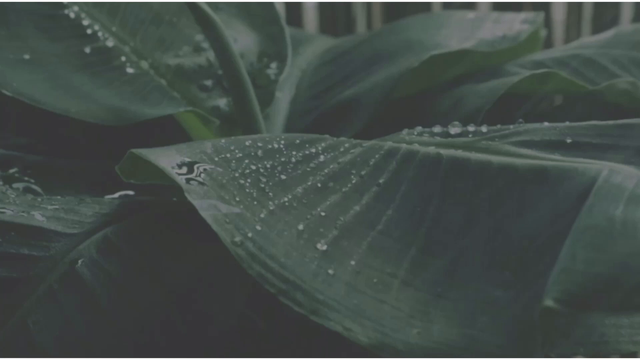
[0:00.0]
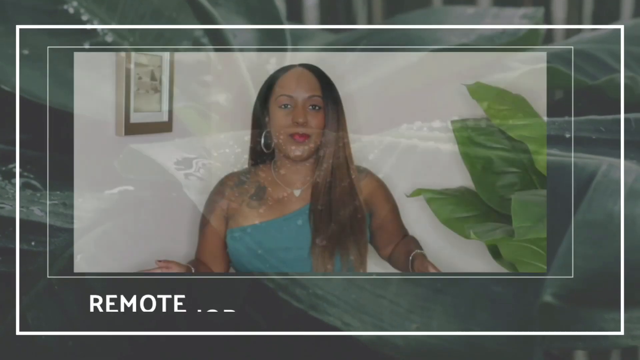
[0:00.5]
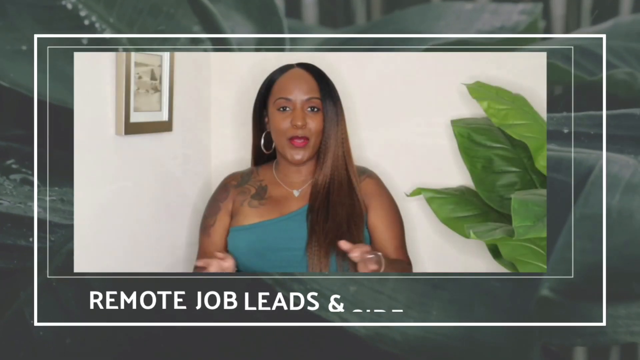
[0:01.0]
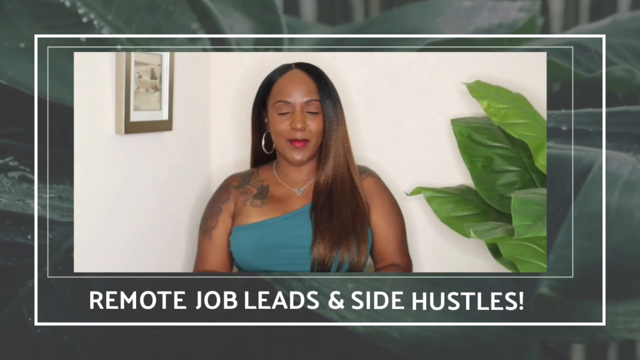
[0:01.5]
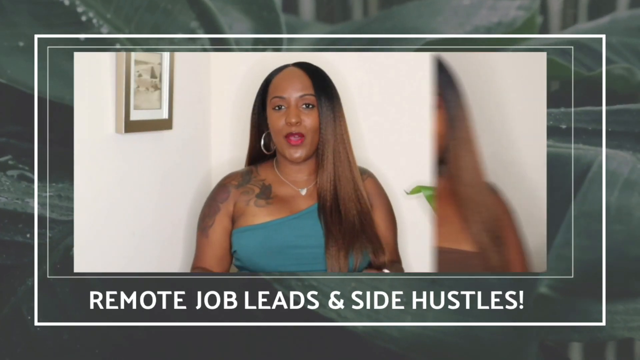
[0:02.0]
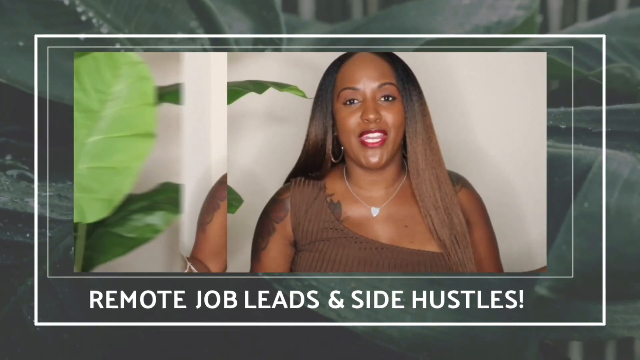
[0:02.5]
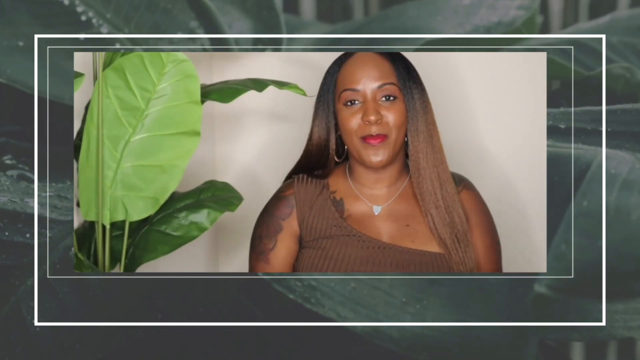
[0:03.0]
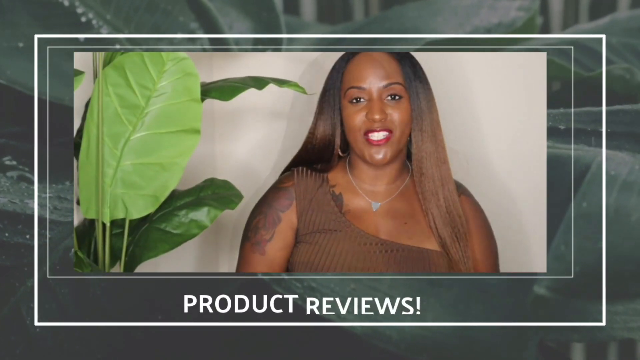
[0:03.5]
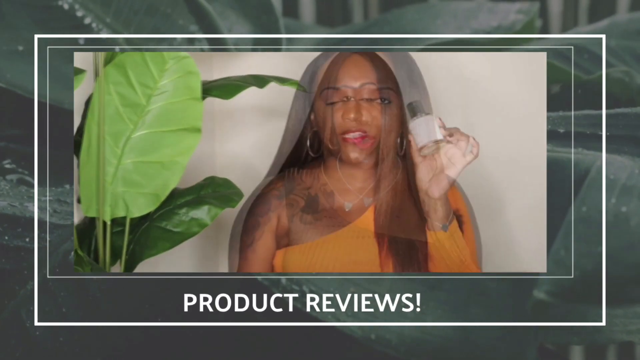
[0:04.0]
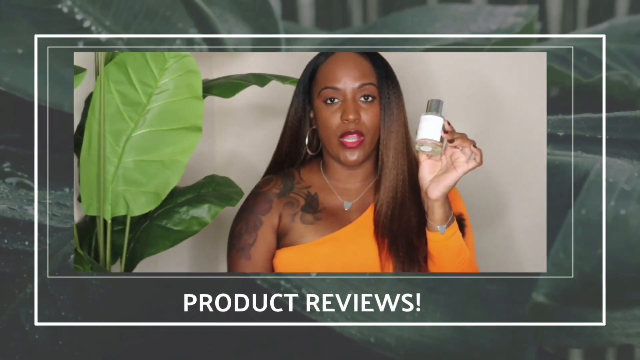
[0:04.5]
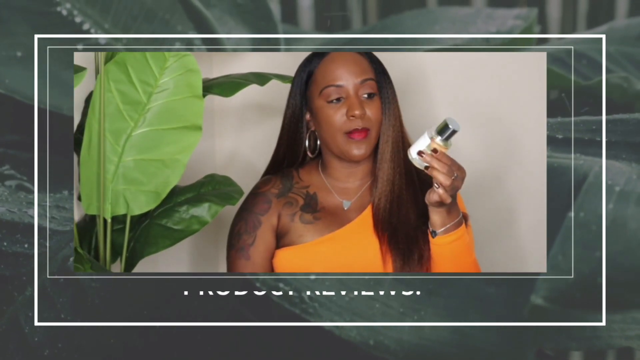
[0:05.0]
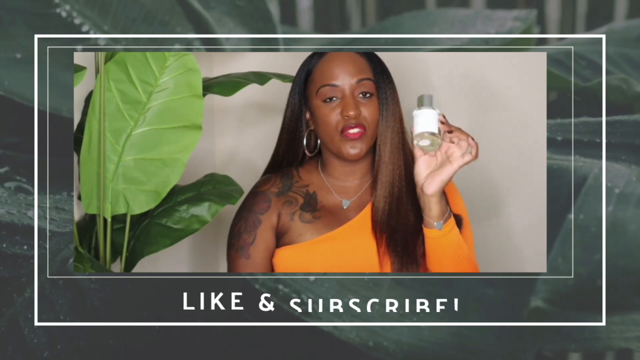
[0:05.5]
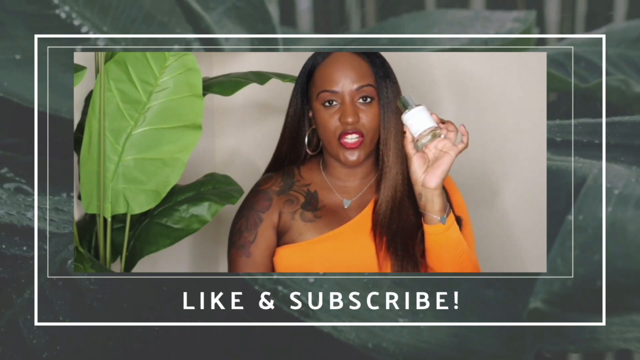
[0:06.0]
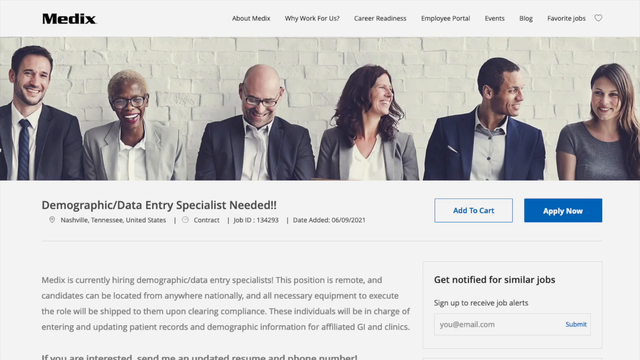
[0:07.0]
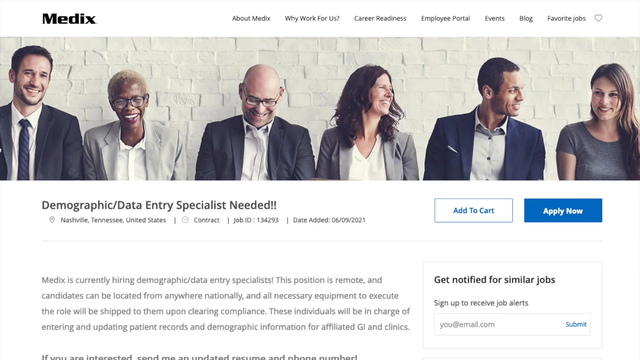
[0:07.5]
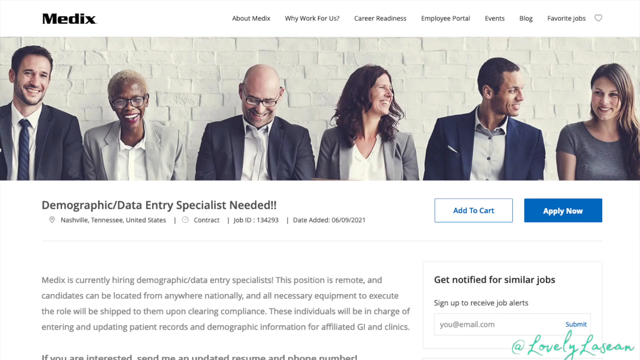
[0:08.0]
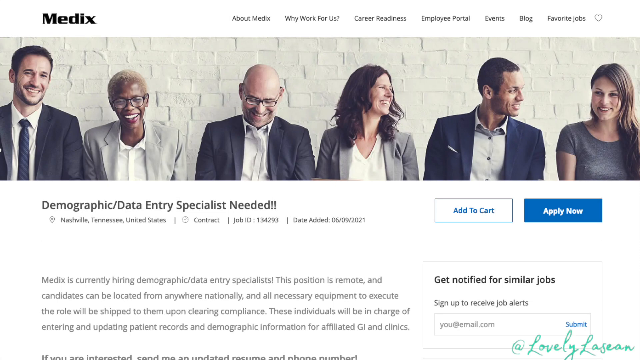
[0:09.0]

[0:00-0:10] The video appears to be some kind of product review on social media, seemingly a YouTube video. An African American woman appears, and the view quickly pans to what is possibly a product page where the product can be bought. It looks professionally done, with various overlays and graphics for the text placed over the top of the video.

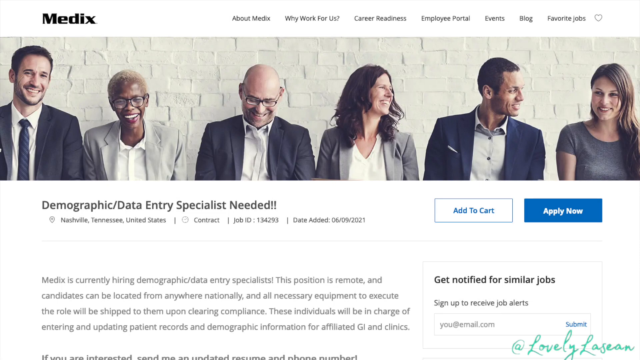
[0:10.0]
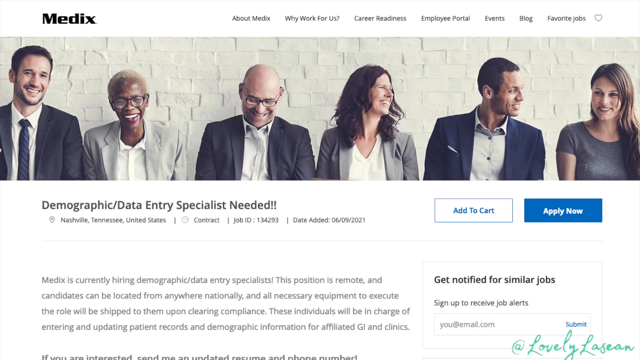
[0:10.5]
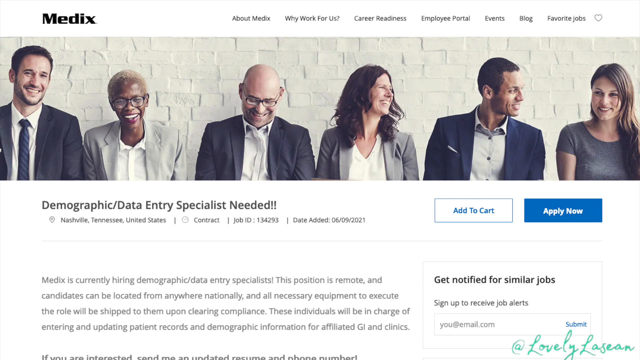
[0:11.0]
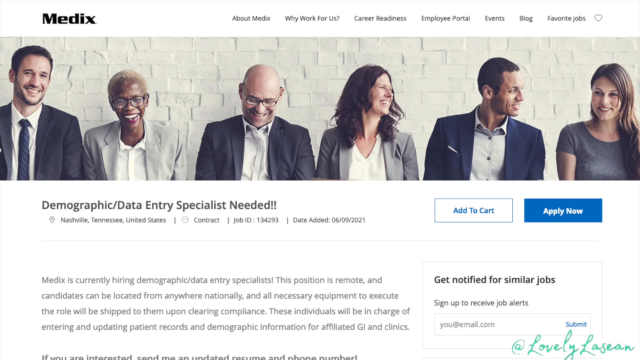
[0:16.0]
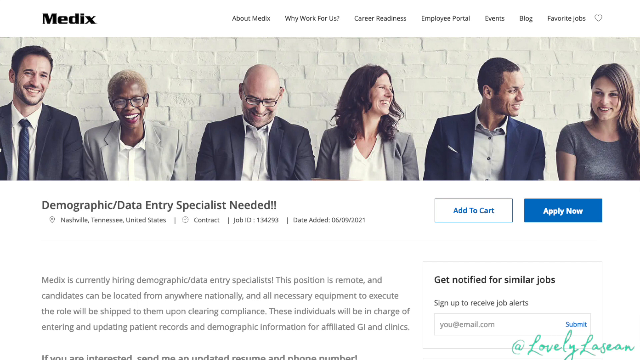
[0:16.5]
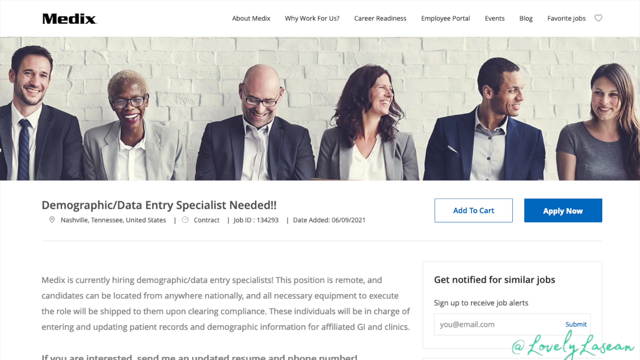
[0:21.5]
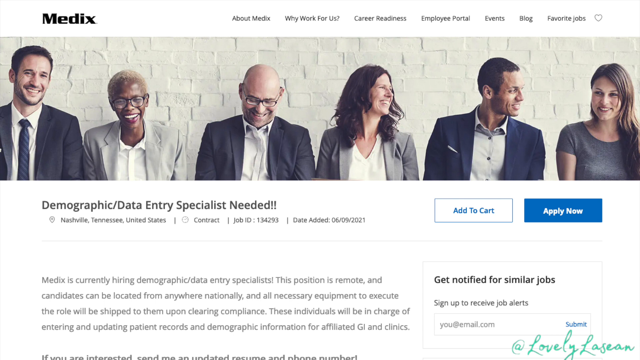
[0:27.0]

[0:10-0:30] The view flips to a page reading "data entry specialist needed." The page shows the location, the contract and the date it was added. The woman is apparently some kind of influencer, possibly showing side hustles and different ways people can make money online, with this data entry specialist job as one example.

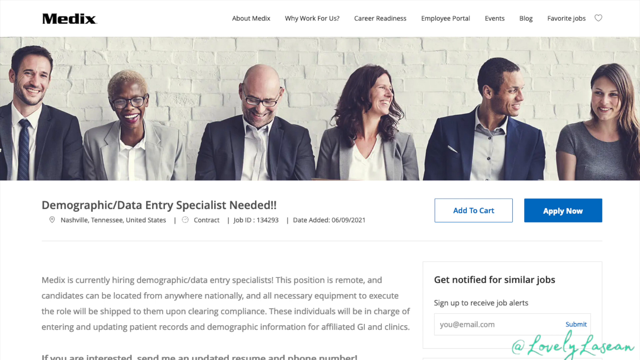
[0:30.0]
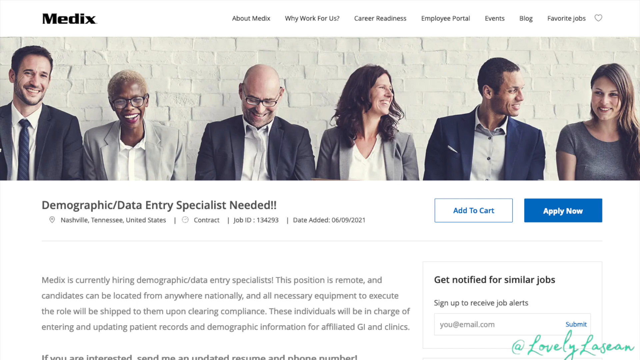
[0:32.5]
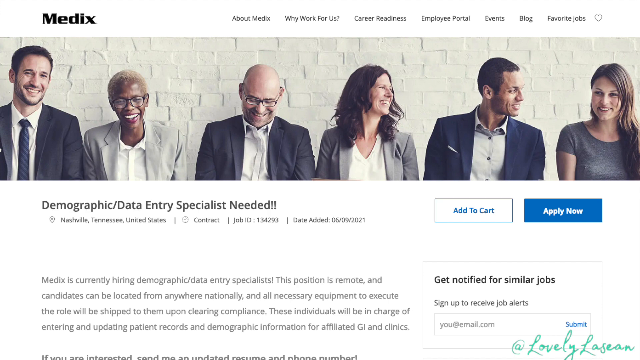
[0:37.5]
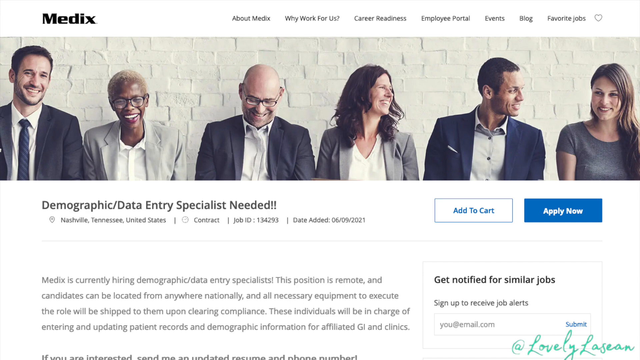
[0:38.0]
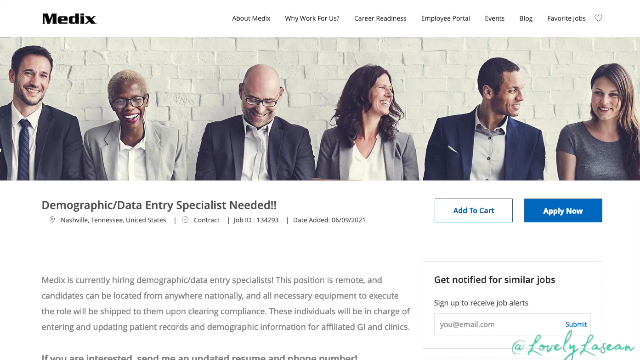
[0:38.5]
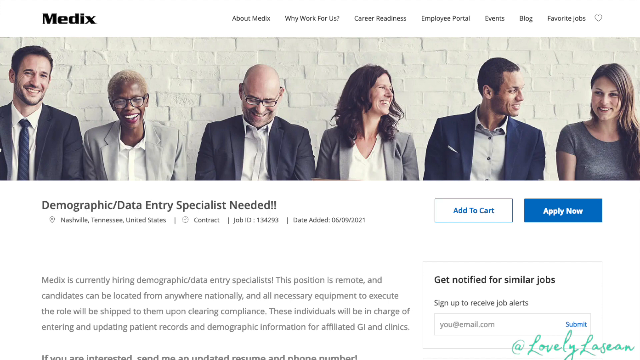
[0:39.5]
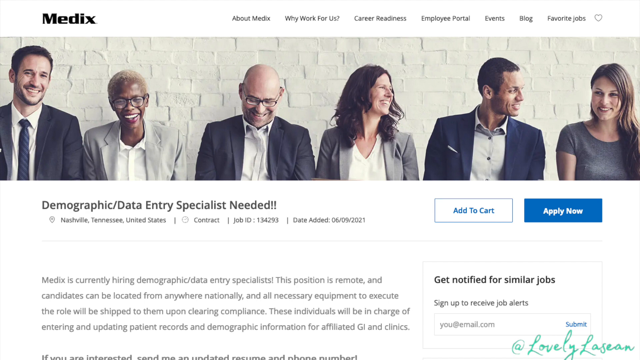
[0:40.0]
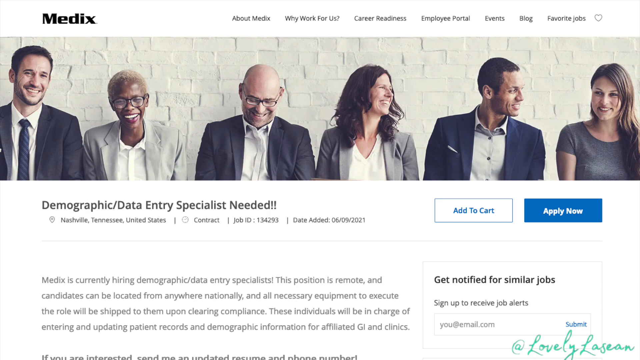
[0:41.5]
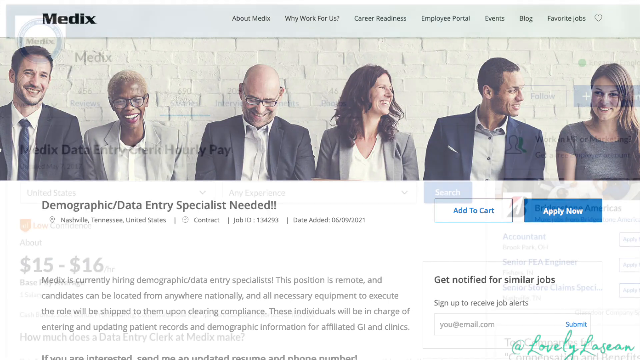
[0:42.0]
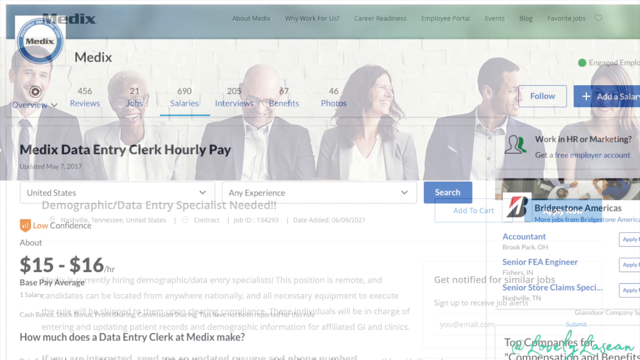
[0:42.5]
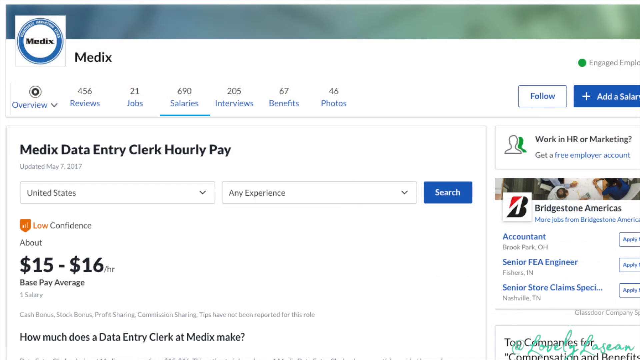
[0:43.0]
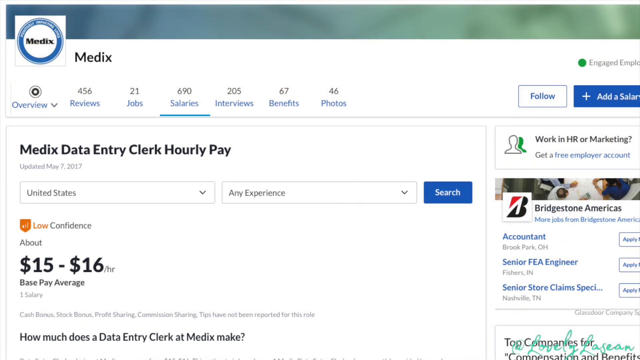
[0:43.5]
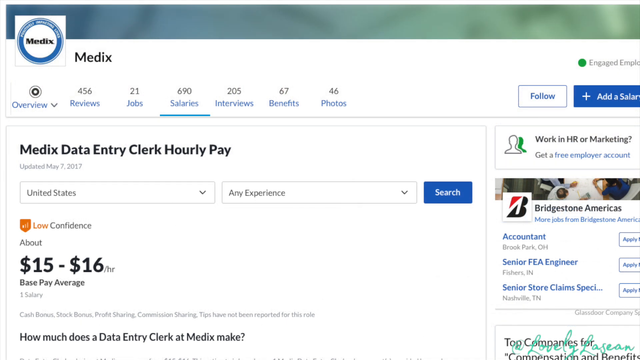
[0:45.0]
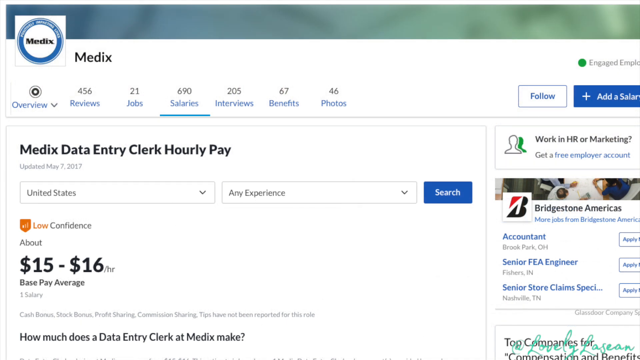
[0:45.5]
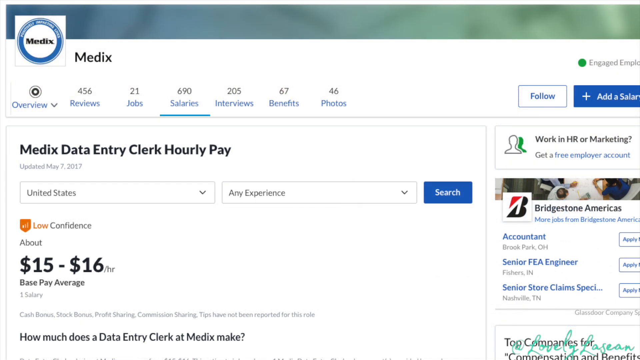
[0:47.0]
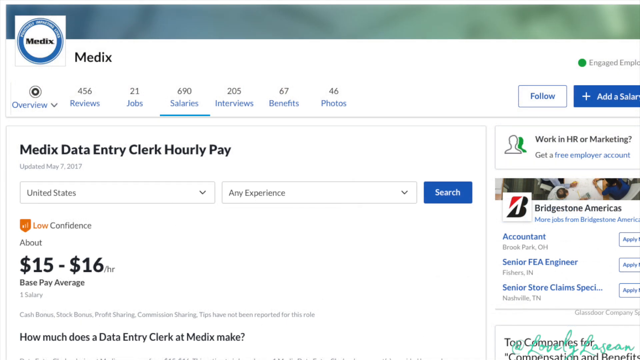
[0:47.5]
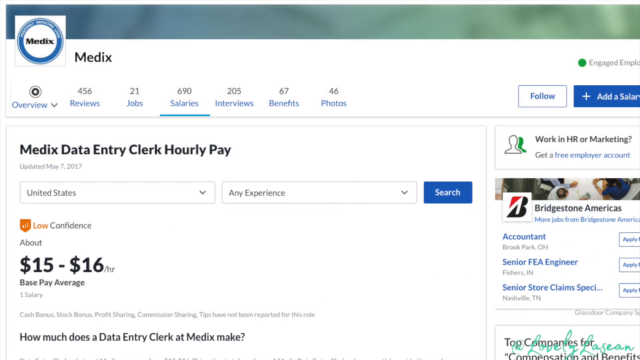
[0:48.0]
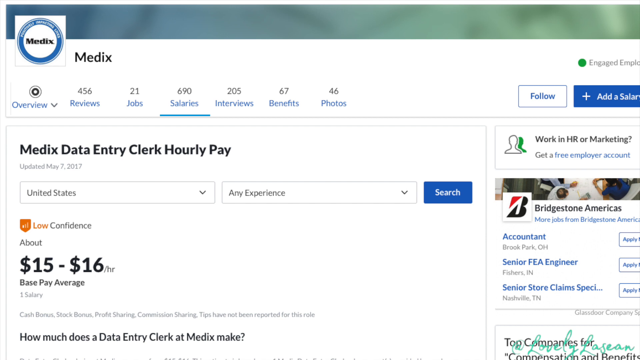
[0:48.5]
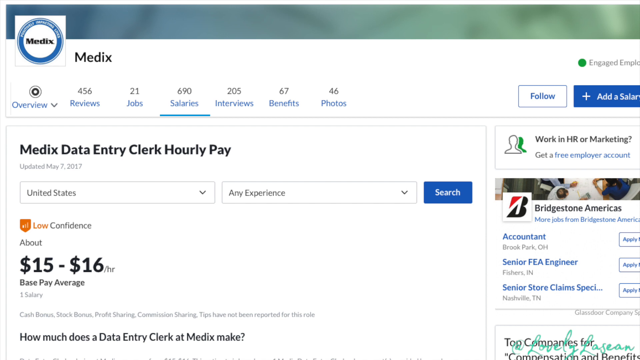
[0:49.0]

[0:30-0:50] The page for the data entry specialist job is shown, then it switches to a page with more detailed information: "Medix data entry," hourly pay, and some basic information. The base average pay is $15 to $16, the job is based in America, and the experience level is any experience. Along the top of the page are reviews, jobs, salaries, interviews, benefits and photos. It does not look like a specific job she is trying to get herself; it seems to give an insight into what the website looks like and what kind of offers are available, apparently on some kind of platform for making a side income.